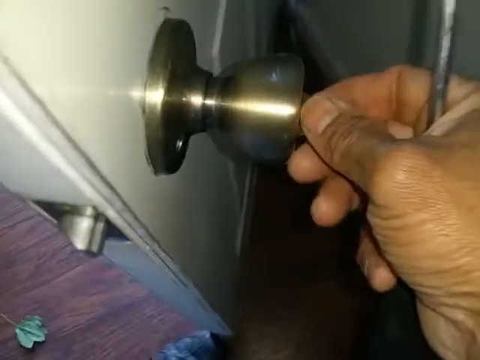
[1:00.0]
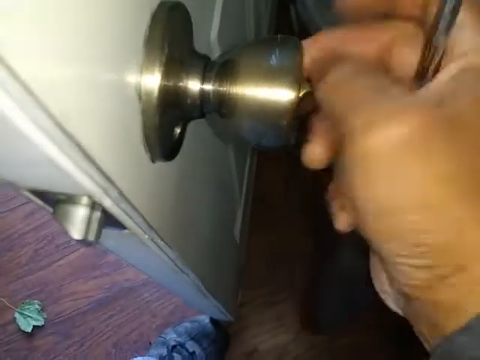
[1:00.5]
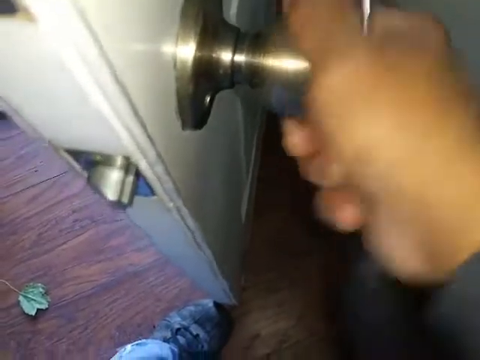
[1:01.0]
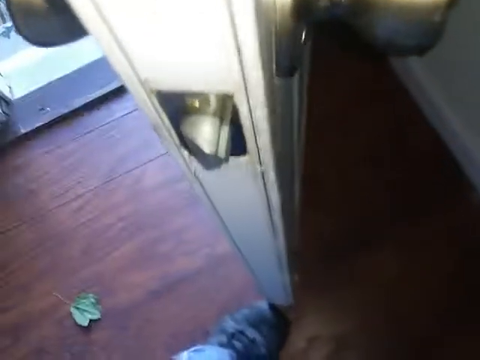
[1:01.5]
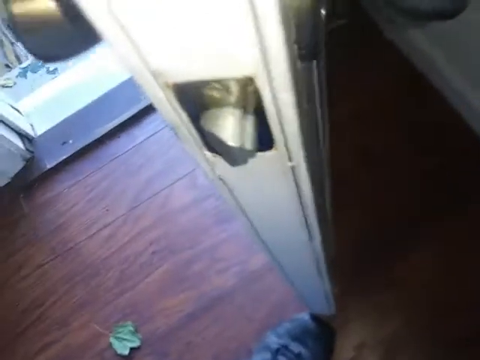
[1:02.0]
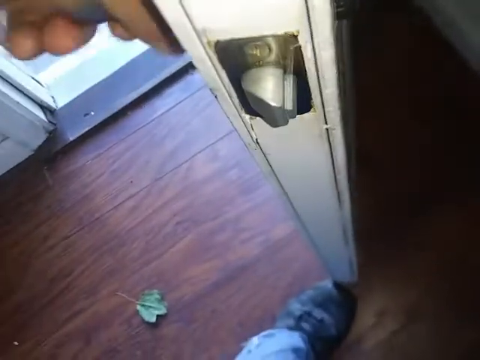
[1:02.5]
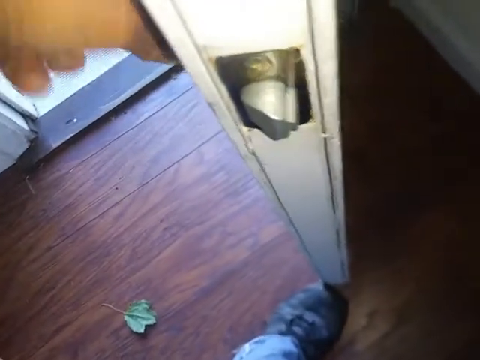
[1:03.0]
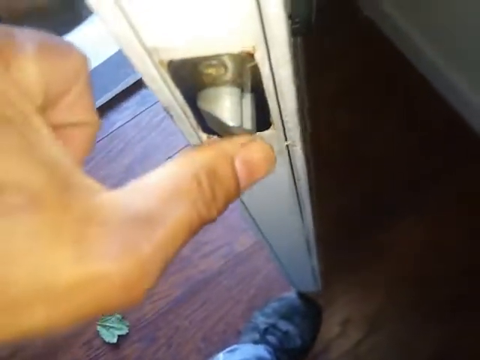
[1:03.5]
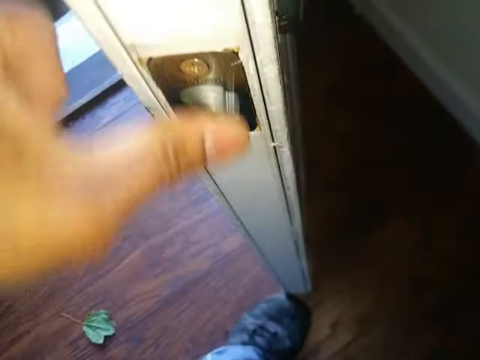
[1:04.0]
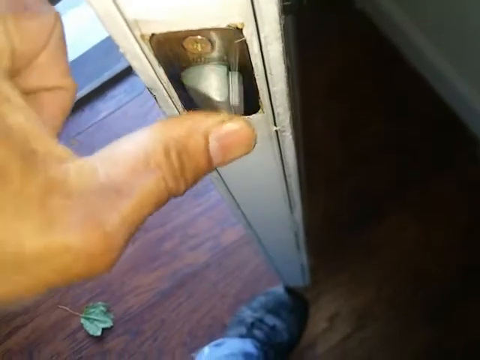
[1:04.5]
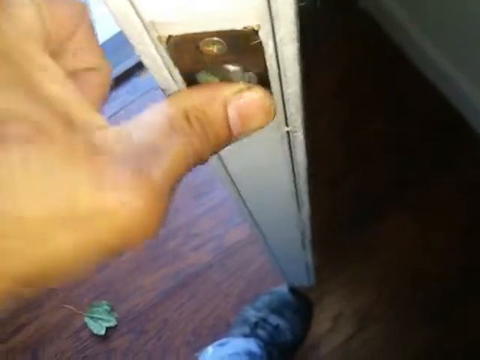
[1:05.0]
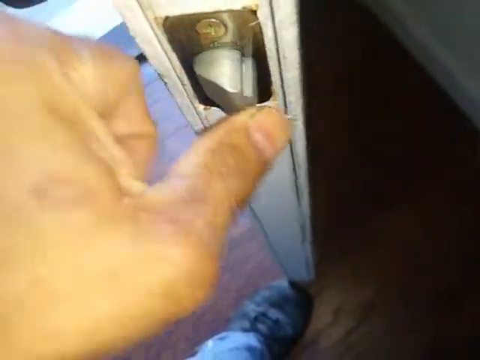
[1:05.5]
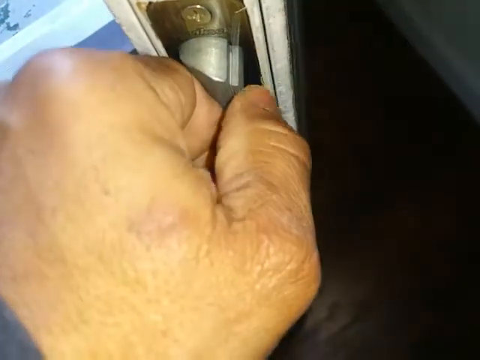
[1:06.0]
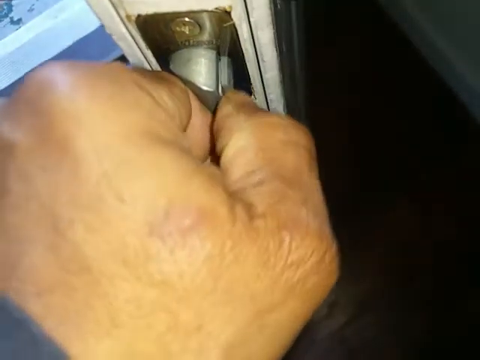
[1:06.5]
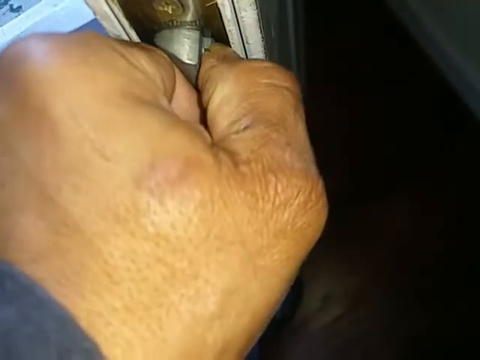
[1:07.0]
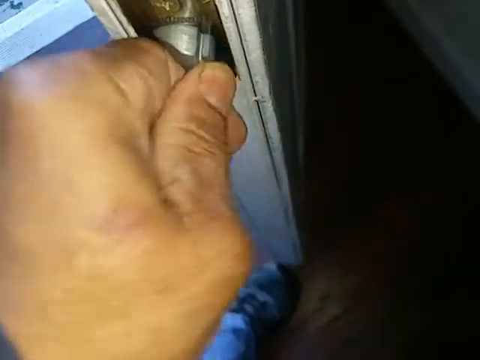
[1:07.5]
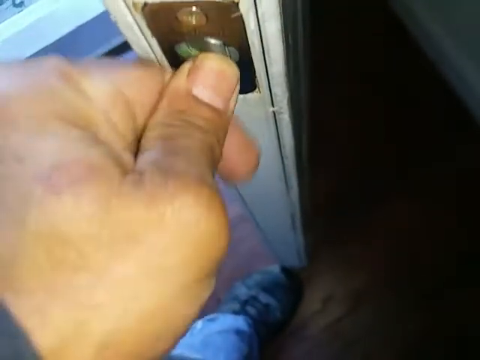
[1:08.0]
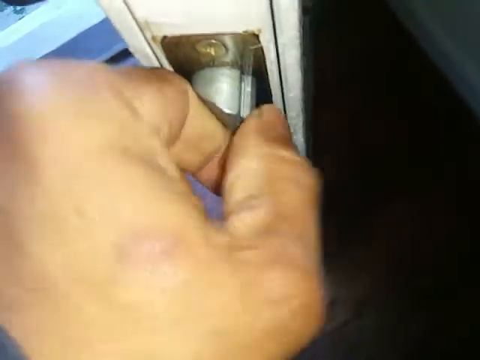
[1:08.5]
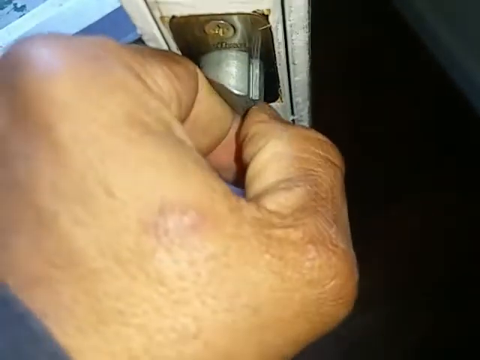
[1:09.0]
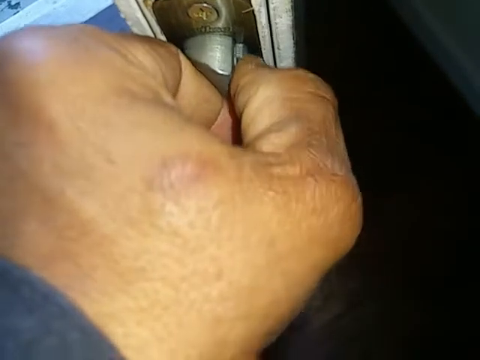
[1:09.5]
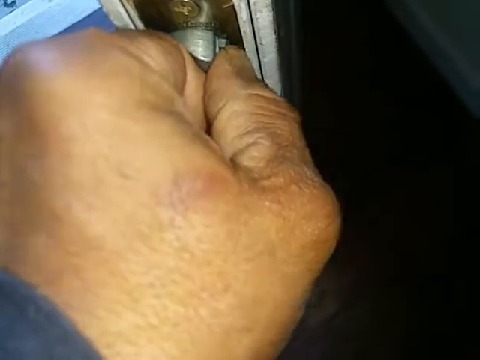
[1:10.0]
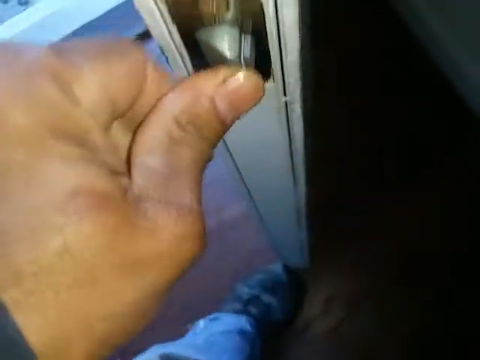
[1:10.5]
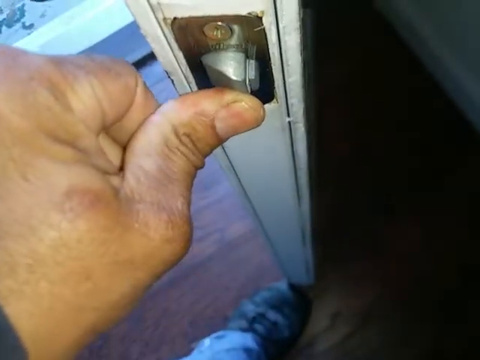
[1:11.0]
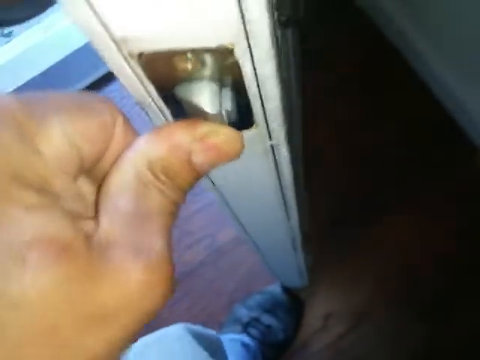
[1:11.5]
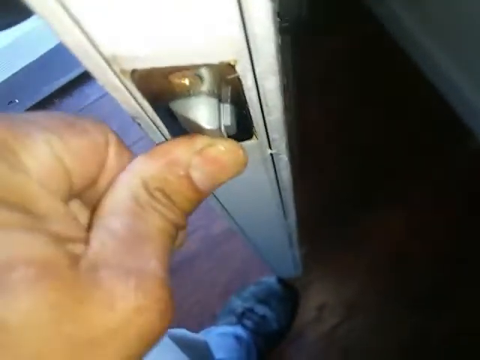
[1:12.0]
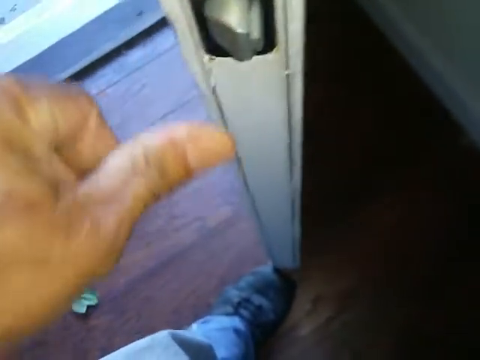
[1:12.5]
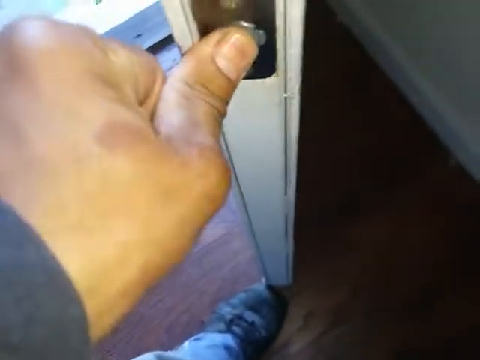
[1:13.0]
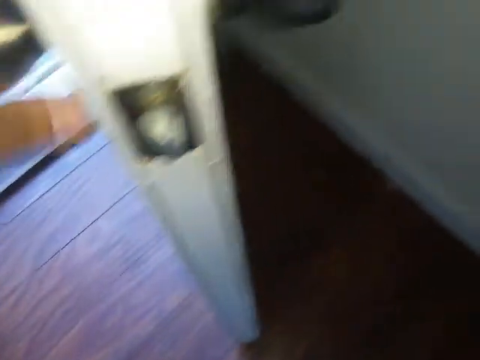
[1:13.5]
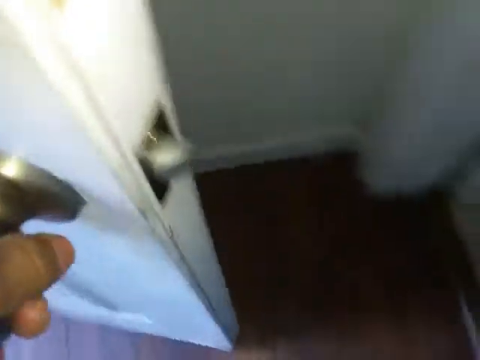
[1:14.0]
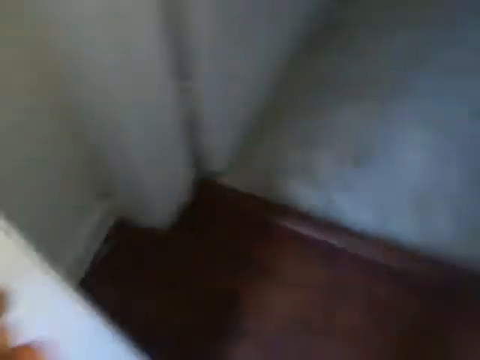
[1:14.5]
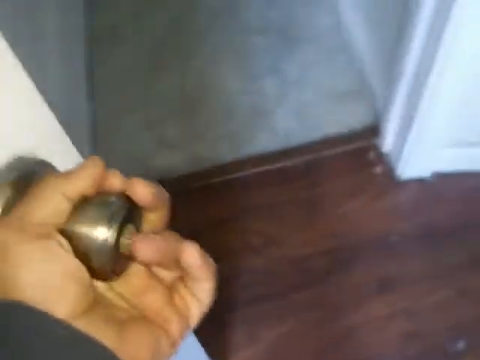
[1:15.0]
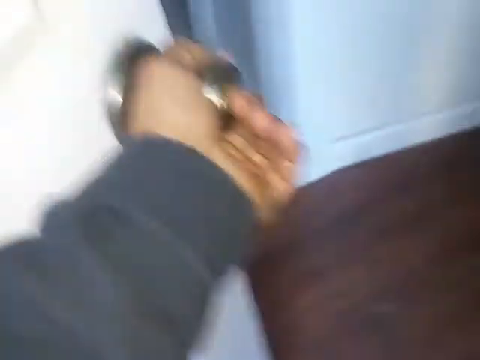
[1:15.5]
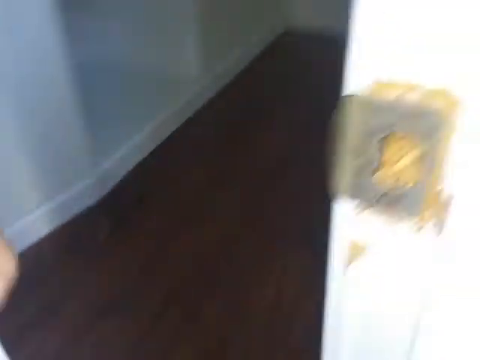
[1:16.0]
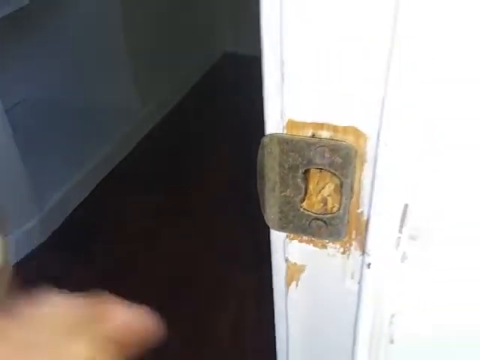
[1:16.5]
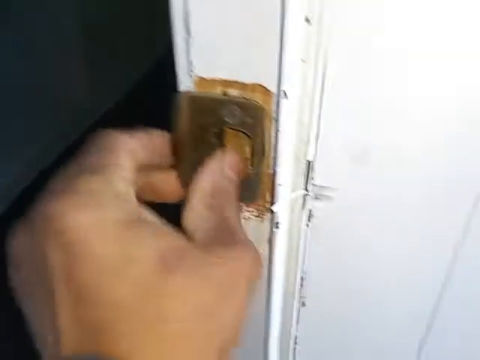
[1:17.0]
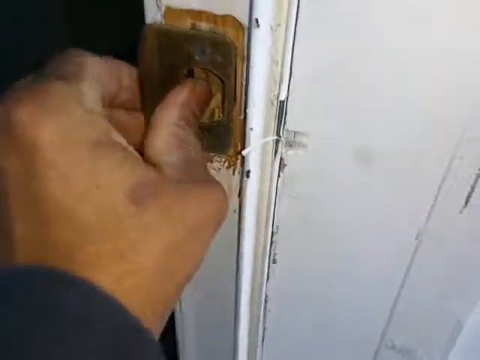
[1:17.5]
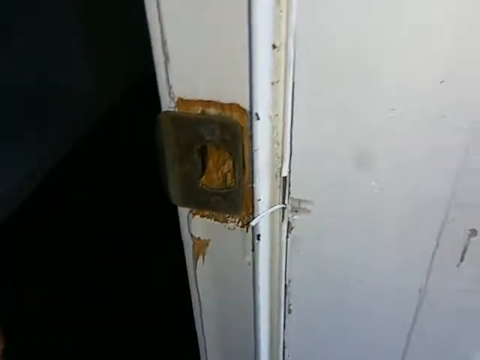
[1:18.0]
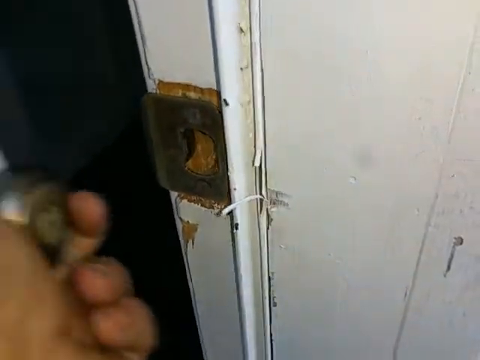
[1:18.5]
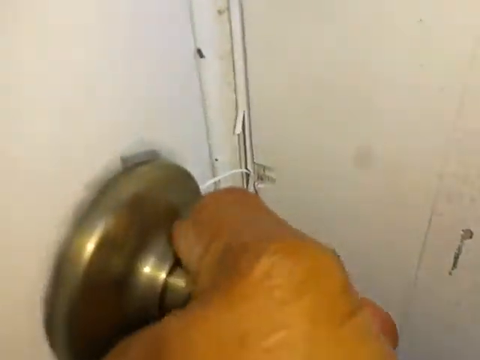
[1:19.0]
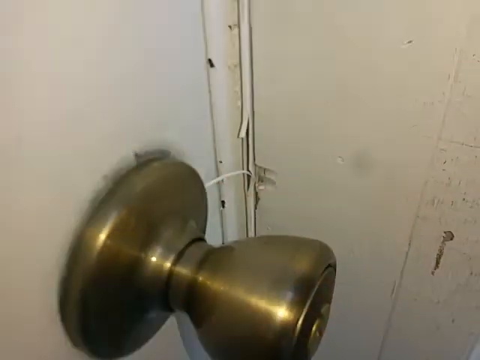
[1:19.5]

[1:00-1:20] The screwdriver is held in the palm of the right hand with its tip angled upward. The hand twists the interior doorknob with the thumb and index finger, confirming that the door is locked from the interior and exterior. The left hand then pushes in the door latch, which moves in and out without resistance. The man walks outside and fiddles with the strike plate with his left hand before closing the door with his left hand. The locking system appears to be malfunctioning, since the latch moves even though the door is locked and the knob does not turn.